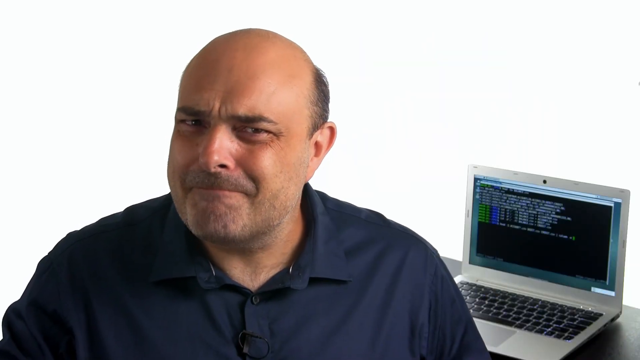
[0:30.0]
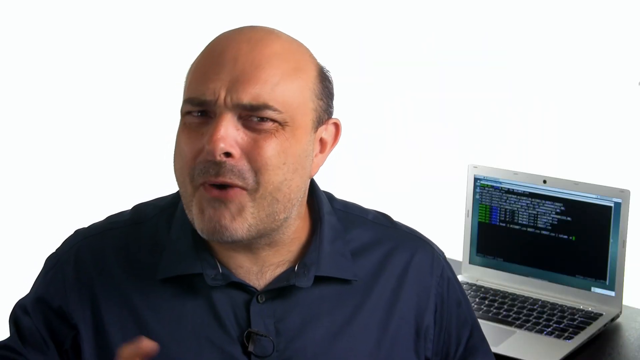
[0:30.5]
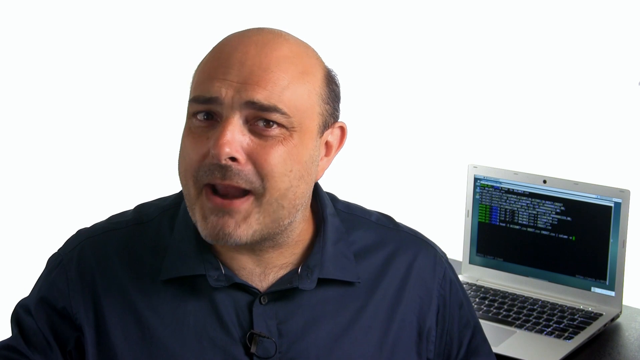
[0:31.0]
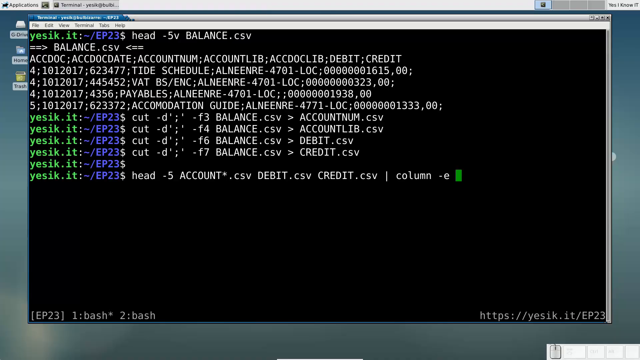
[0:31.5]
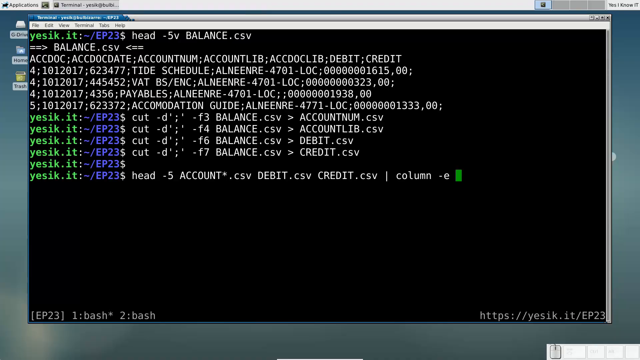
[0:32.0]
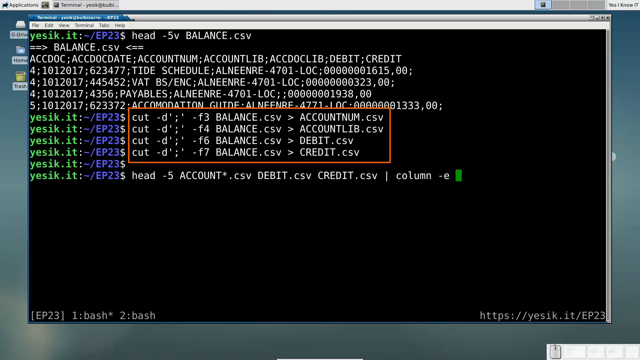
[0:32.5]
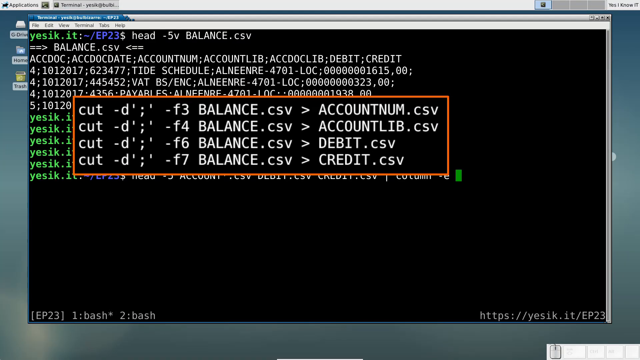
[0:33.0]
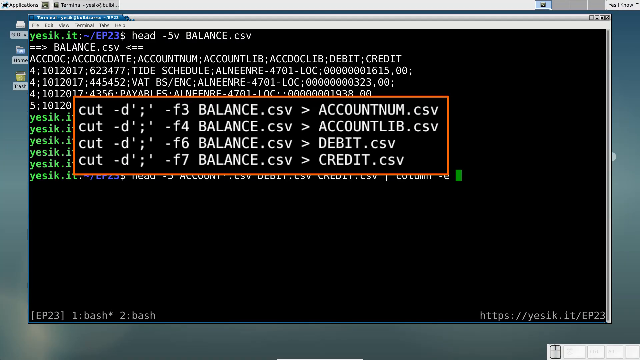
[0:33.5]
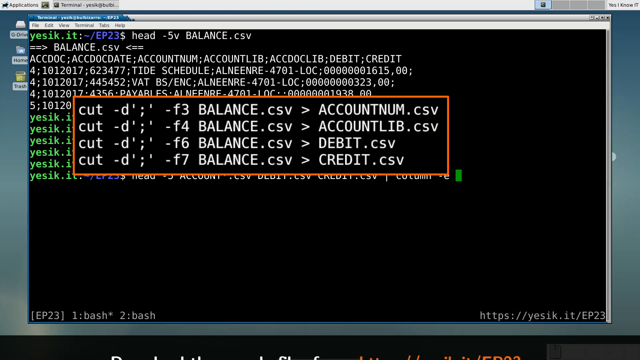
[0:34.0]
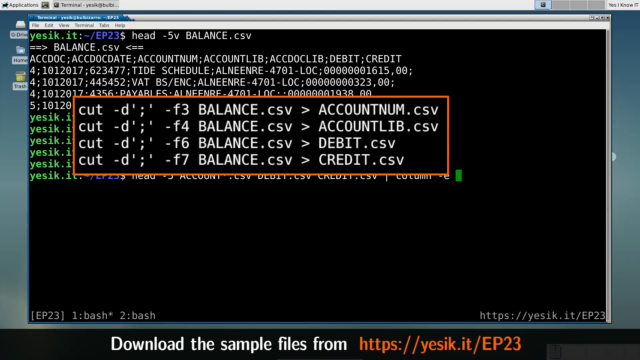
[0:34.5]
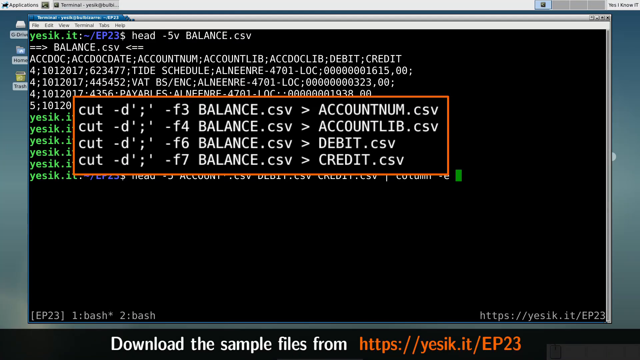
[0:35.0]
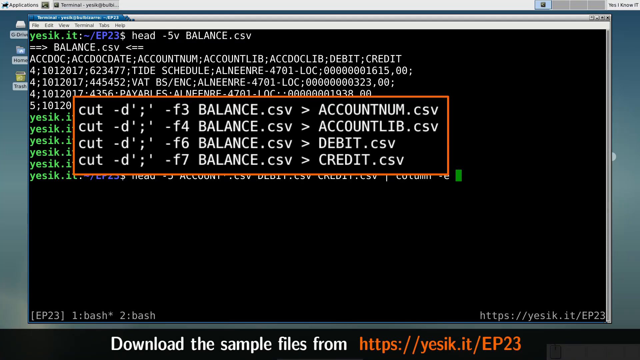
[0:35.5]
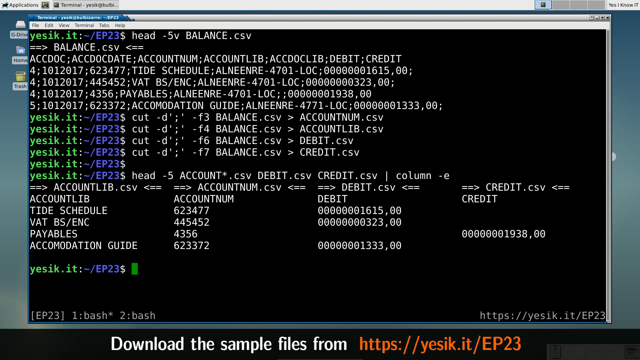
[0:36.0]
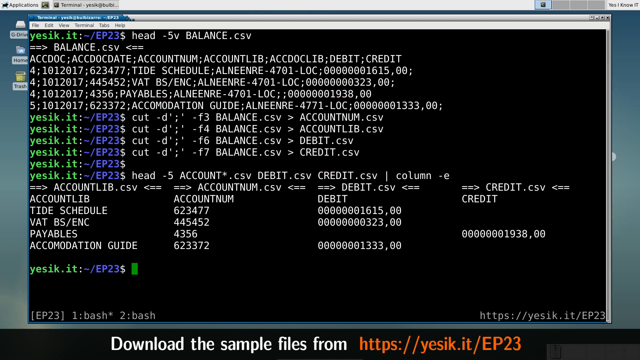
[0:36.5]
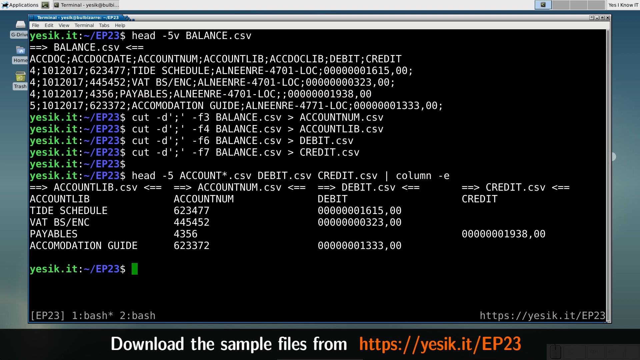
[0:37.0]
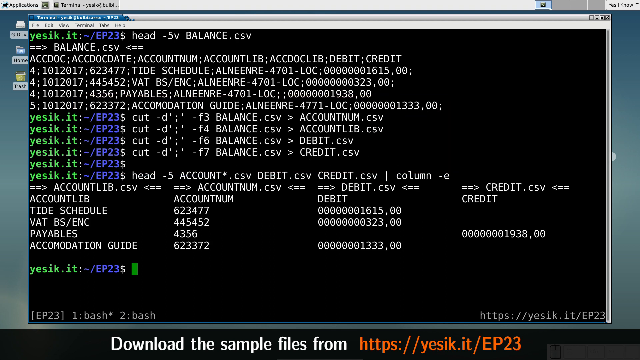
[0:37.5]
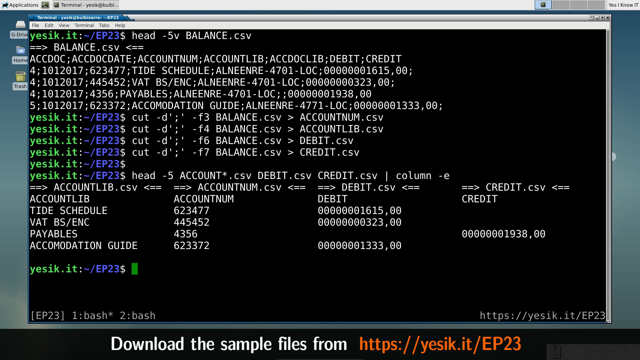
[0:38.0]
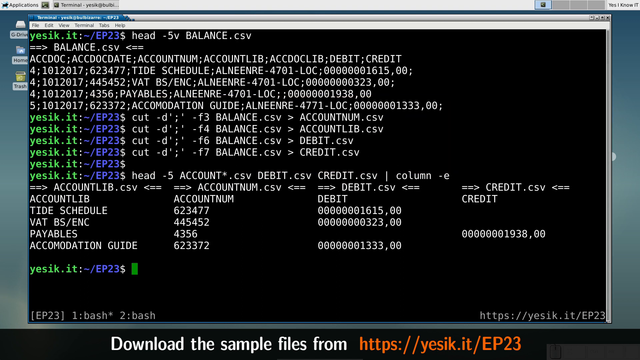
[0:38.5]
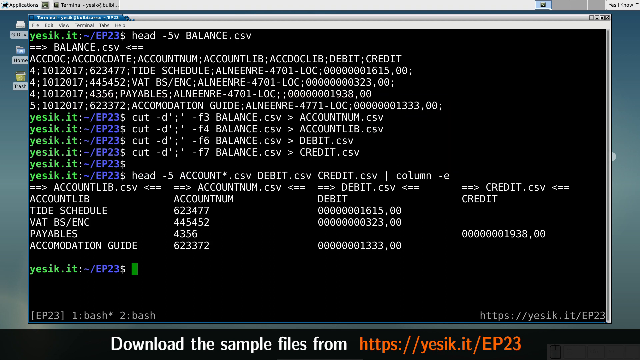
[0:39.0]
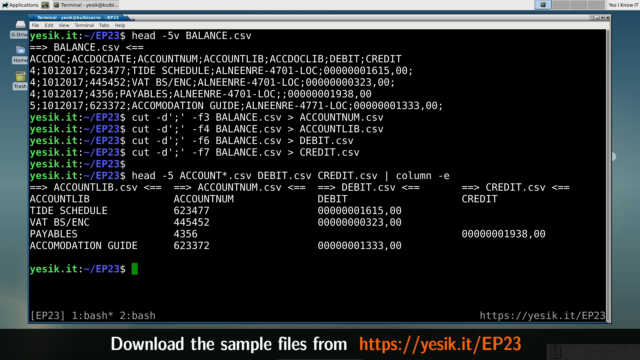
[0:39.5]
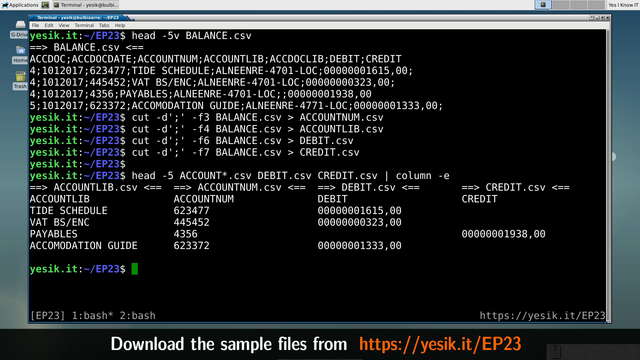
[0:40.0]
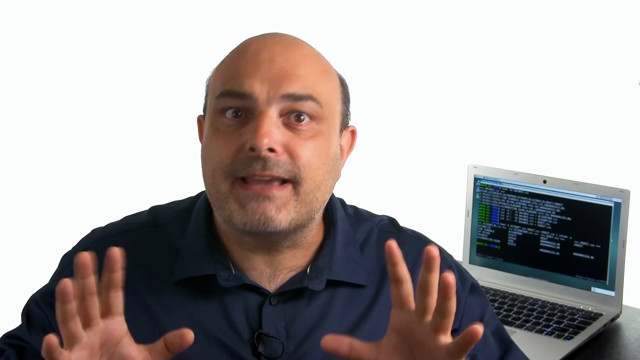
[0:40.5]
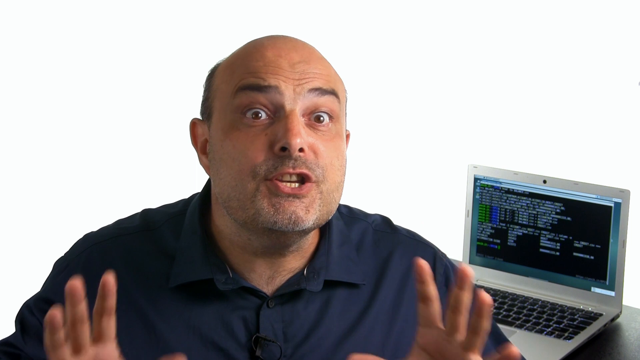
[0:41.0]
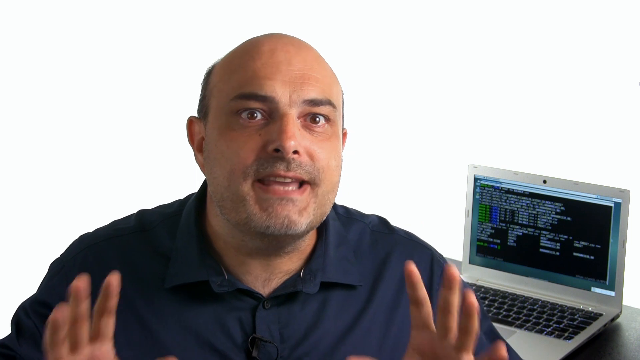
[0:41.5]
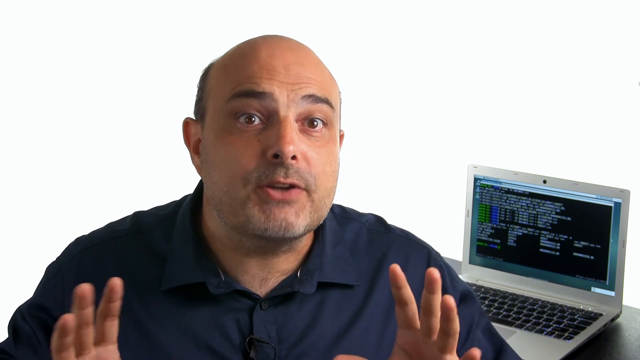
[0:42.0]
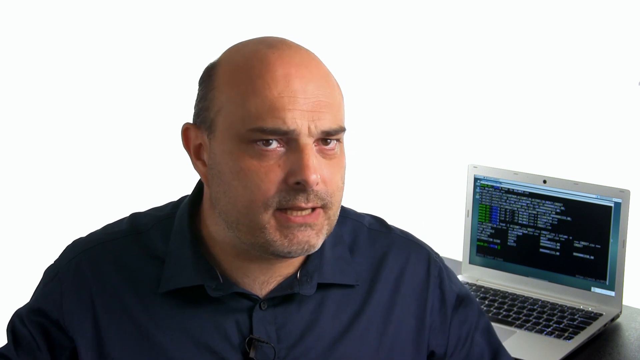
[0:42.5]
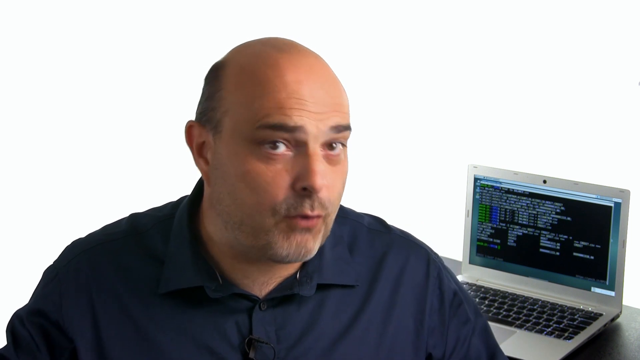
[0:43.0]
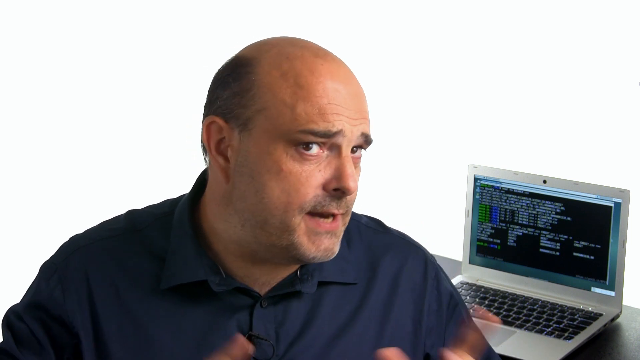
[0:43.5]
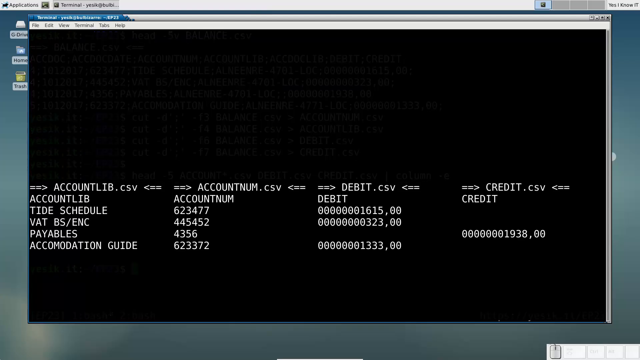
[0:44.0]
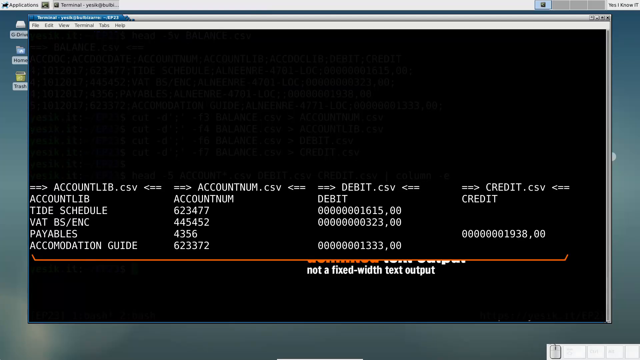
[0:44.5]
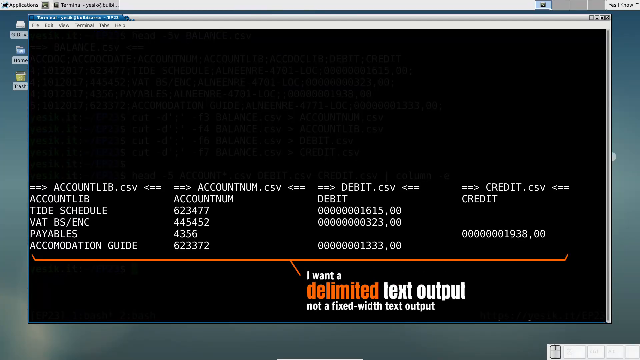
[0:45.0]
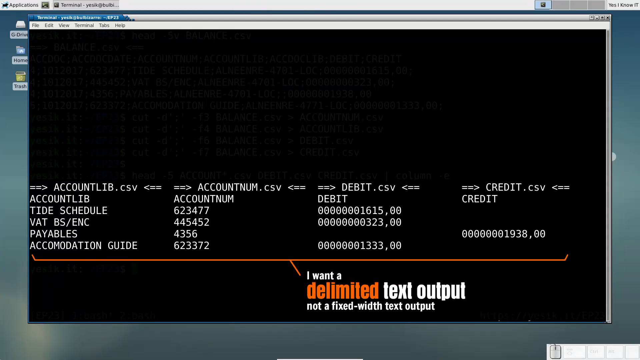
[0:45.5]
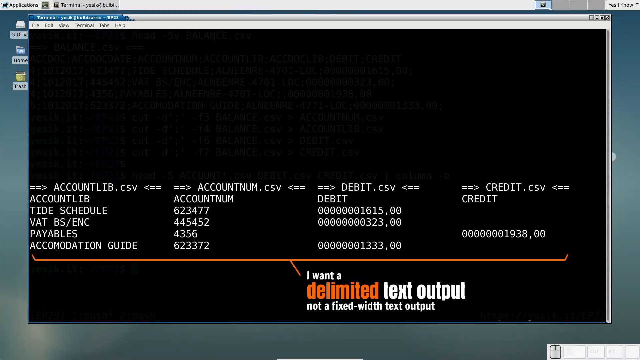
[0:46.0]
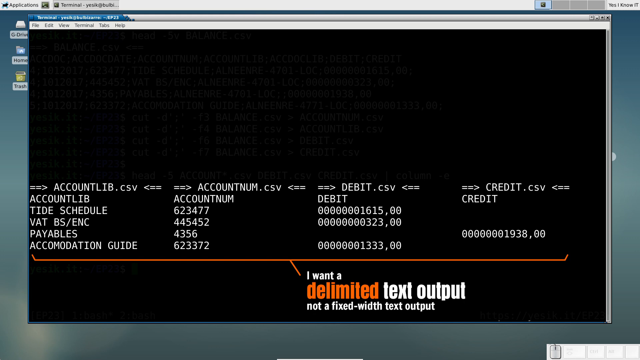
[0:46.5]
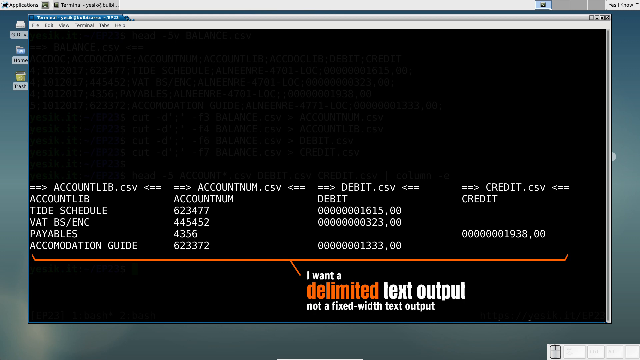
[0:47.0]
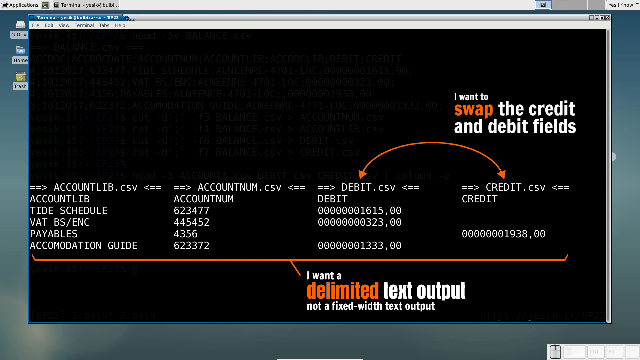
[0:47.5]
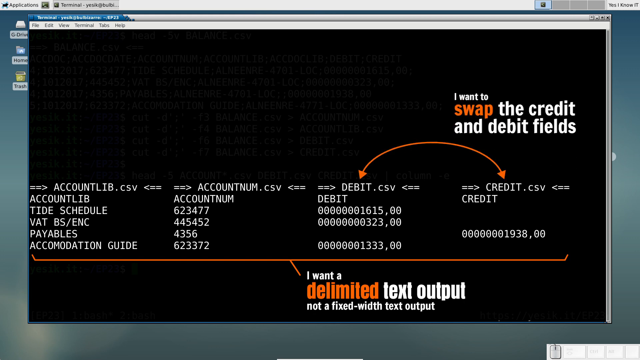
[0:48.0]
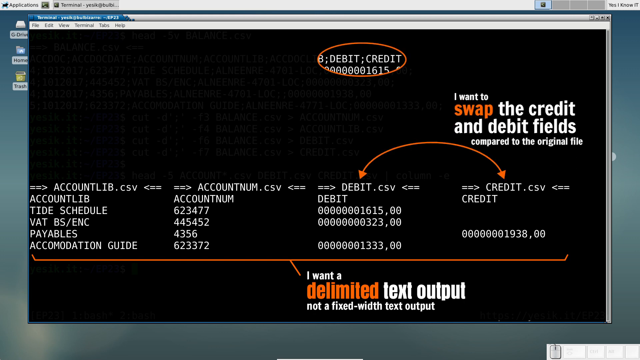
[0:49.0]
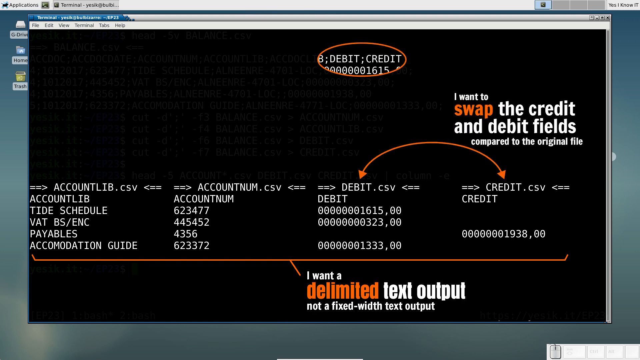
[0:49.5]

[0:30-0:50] The shot returns to the white background with the man on the left and the laptop on the right. His chin is kind of turned to the left and his head tilted a little to the right as he squints, talking intently into the camera. It cuts to a laptop screen with a large pop-up covering almost the whole screen. The pop-up has a black background with many commands down the side, some green, some blue and many white. Toward the bottom, a red border goes around four lines of code, which rise off the screen toward the camera. That goes away, and more information appears below it. It cuts back to the man talking with both hands out in front of him, his fingers sticking up from the bottom of the frame with their undersides toward the camera, leaning in a little with his eyebrows raised, talking intently. He drops his hands, dips his head, lowers his eyebrows and turns his head a little to the right as his thumbs come up. It then returns to the laptop screen, where different text comes up all over the screen.